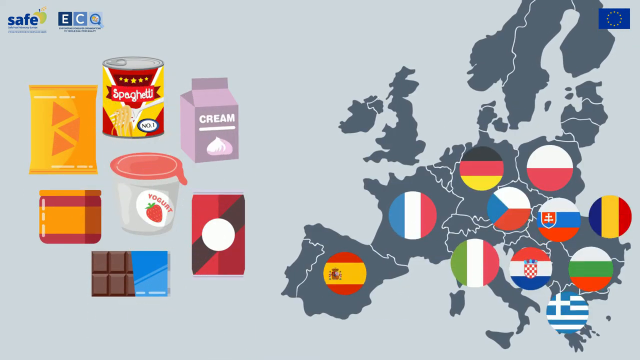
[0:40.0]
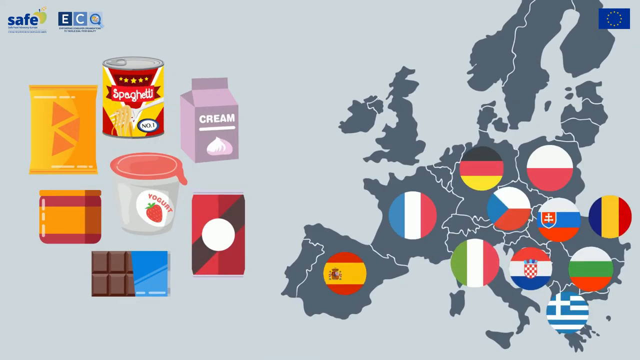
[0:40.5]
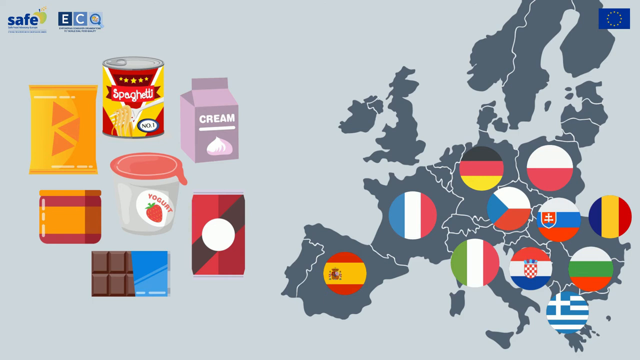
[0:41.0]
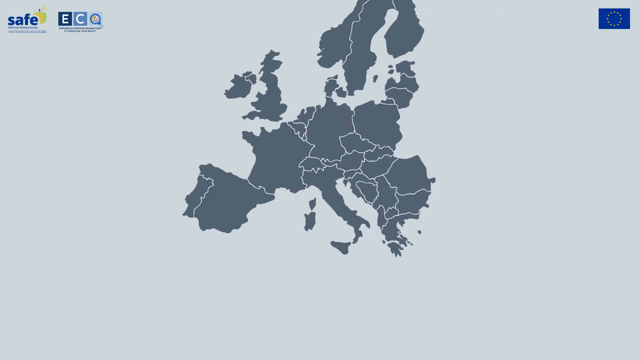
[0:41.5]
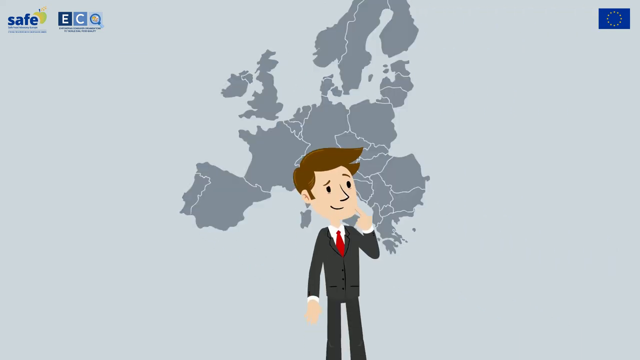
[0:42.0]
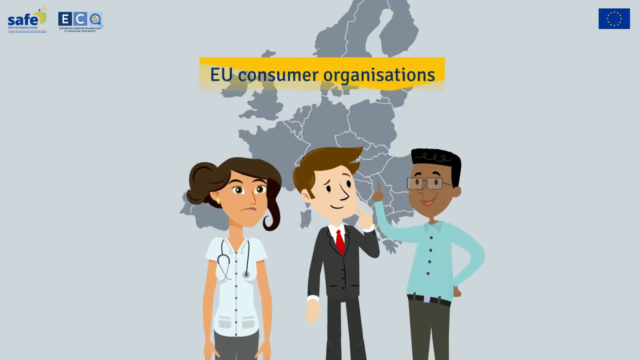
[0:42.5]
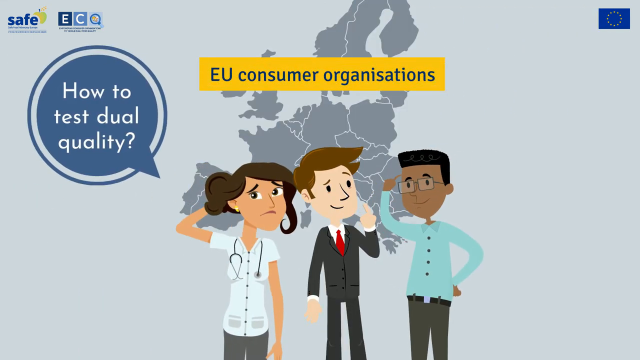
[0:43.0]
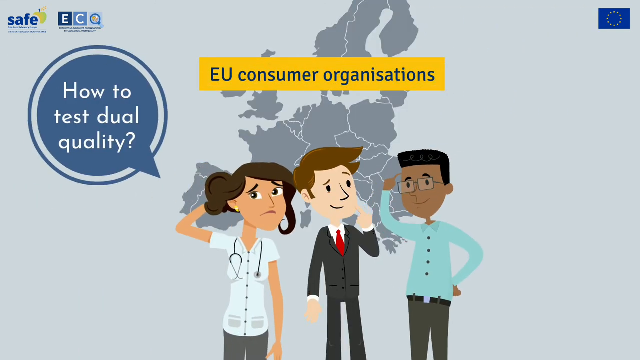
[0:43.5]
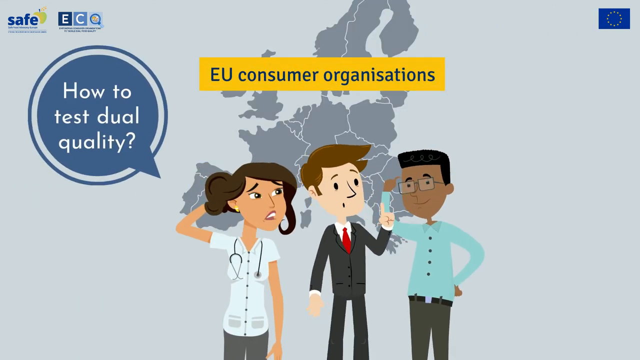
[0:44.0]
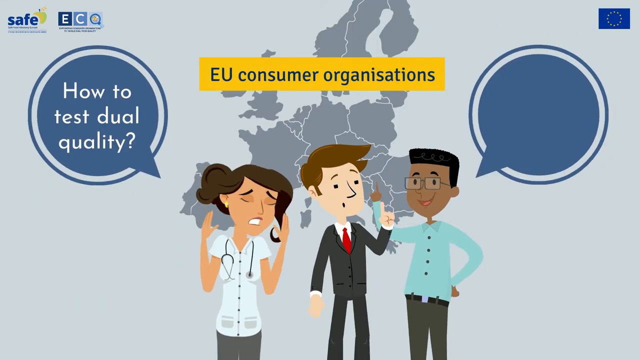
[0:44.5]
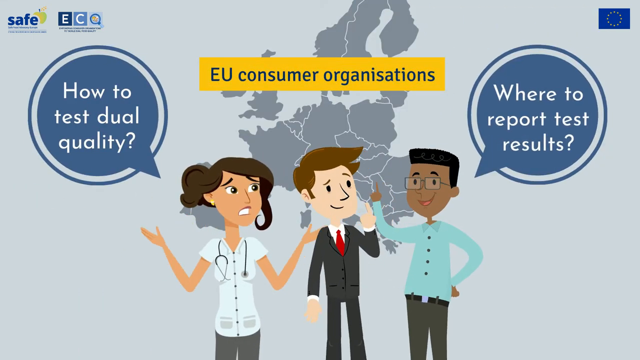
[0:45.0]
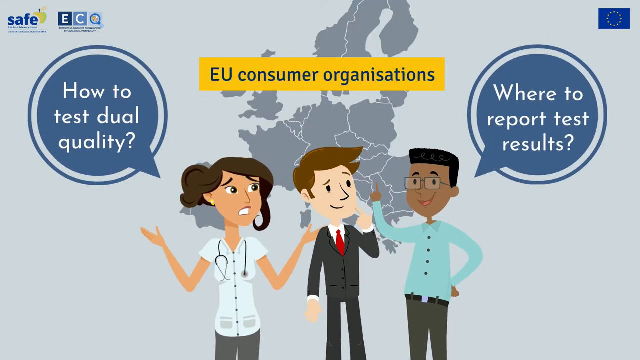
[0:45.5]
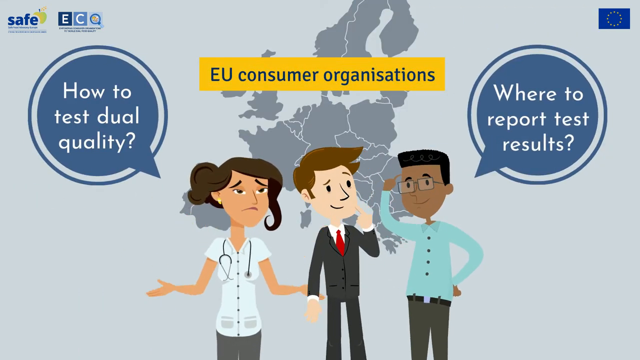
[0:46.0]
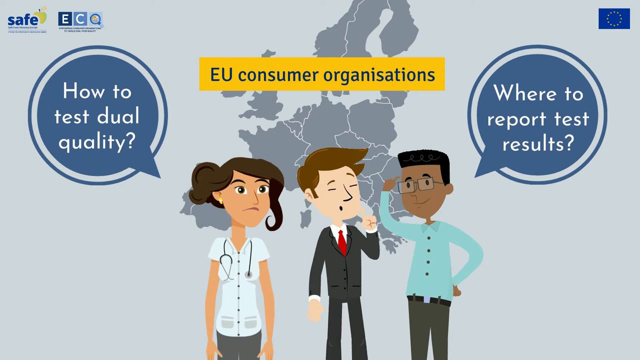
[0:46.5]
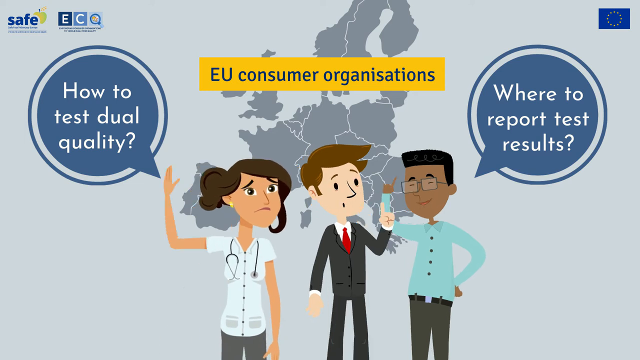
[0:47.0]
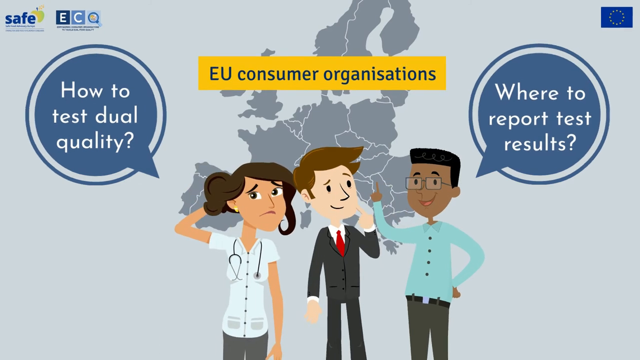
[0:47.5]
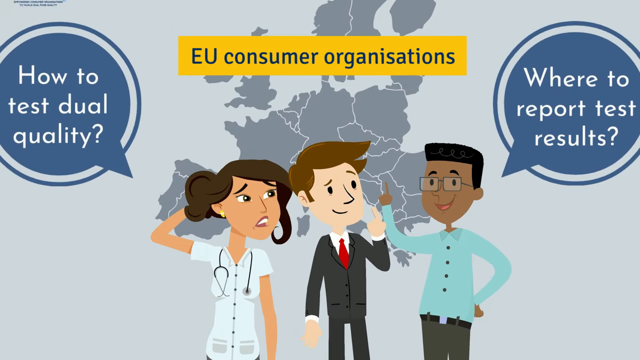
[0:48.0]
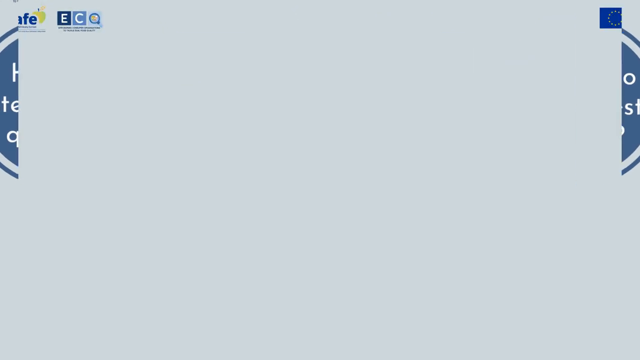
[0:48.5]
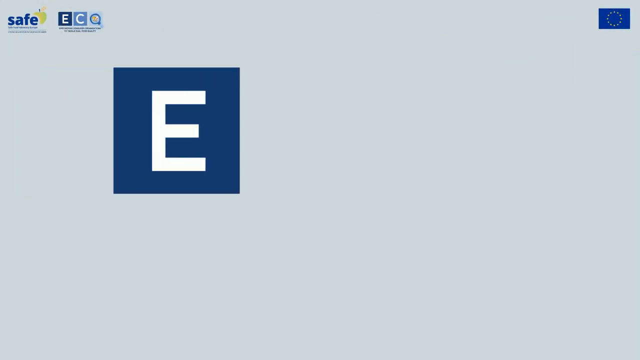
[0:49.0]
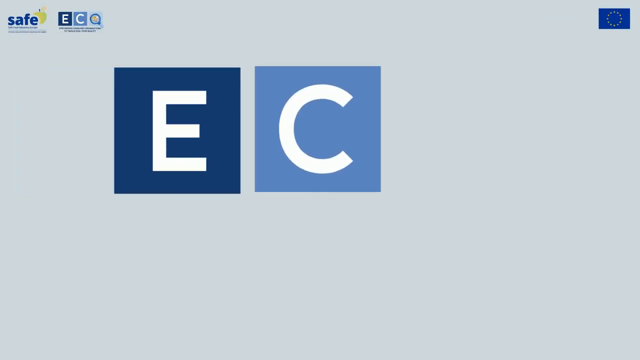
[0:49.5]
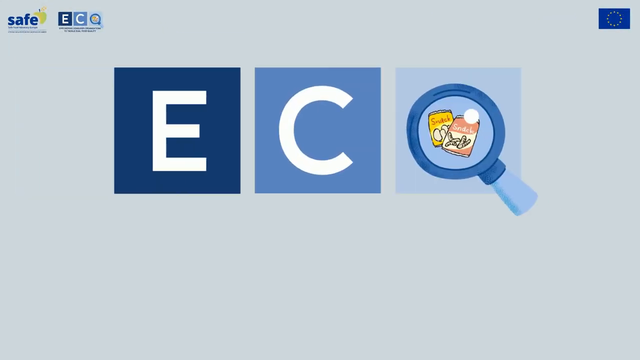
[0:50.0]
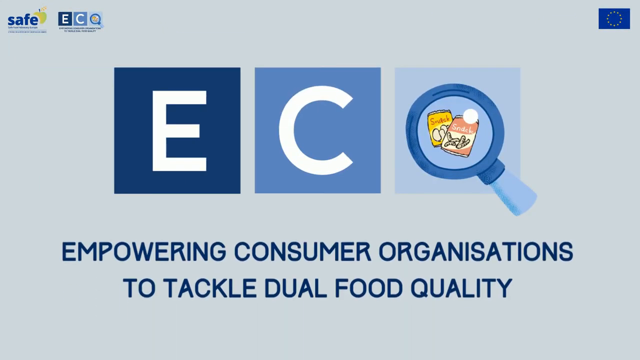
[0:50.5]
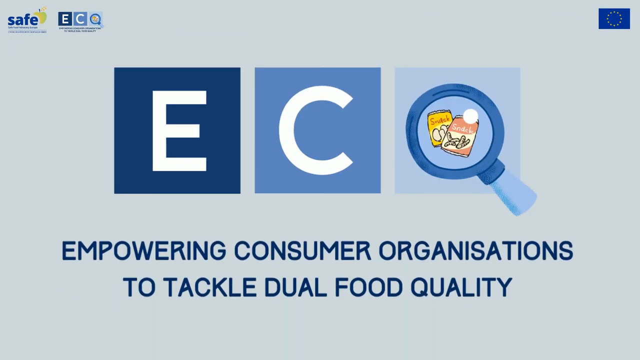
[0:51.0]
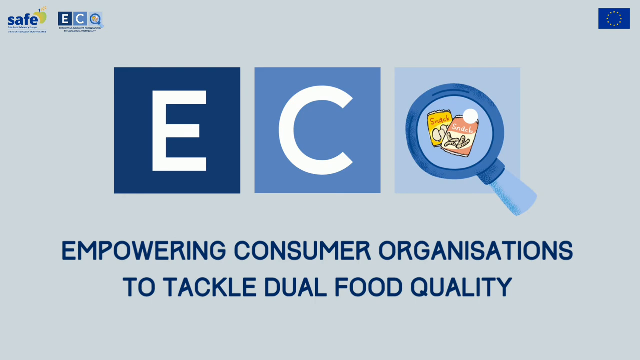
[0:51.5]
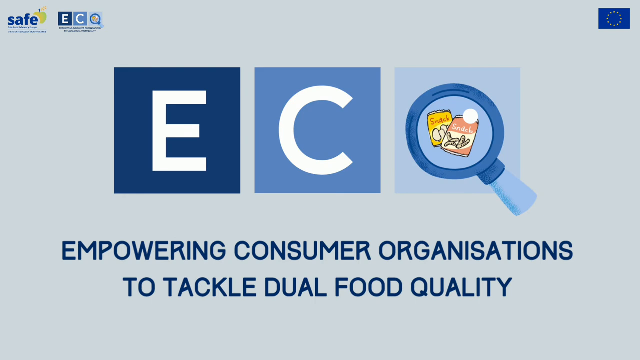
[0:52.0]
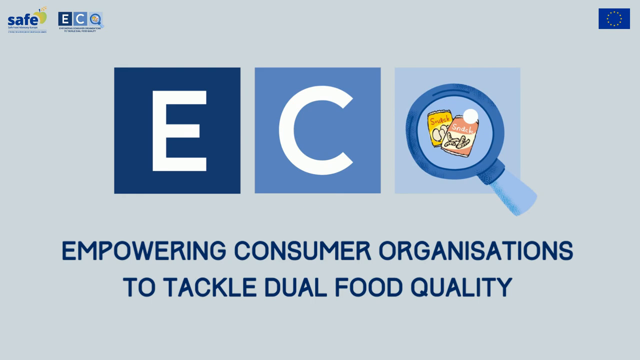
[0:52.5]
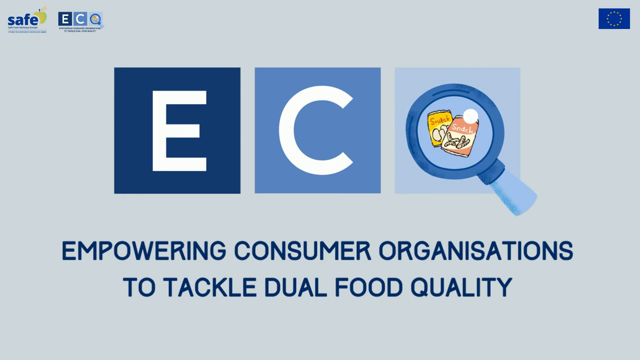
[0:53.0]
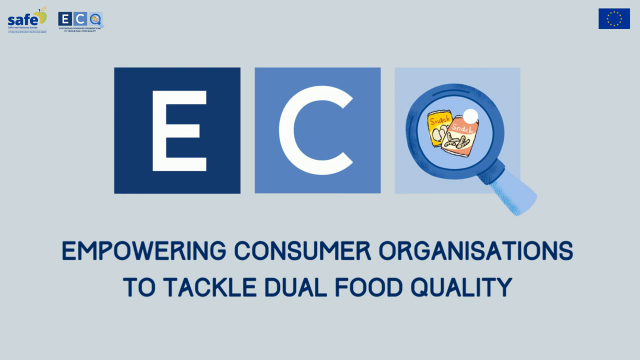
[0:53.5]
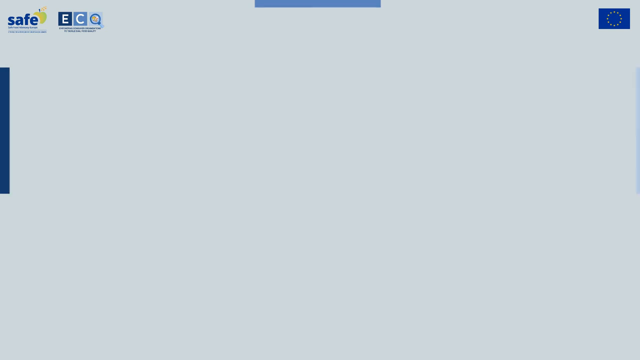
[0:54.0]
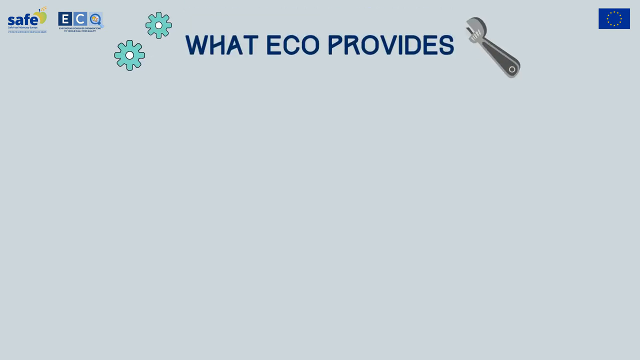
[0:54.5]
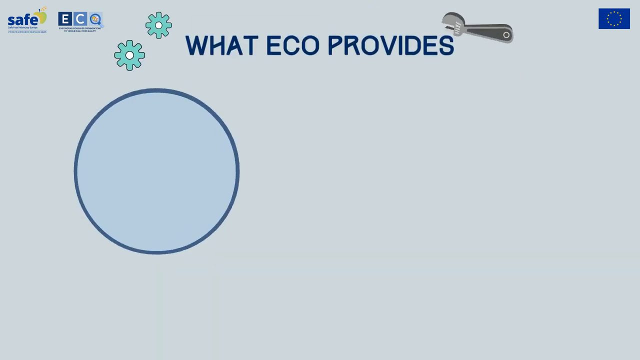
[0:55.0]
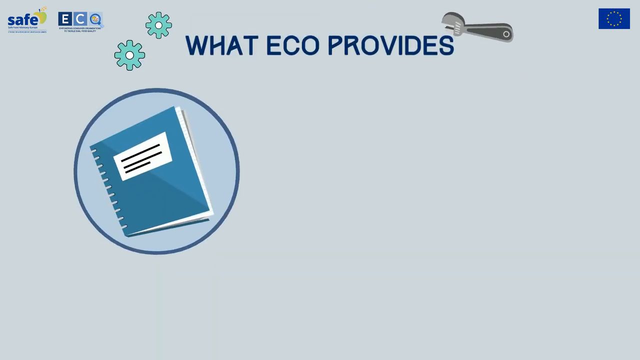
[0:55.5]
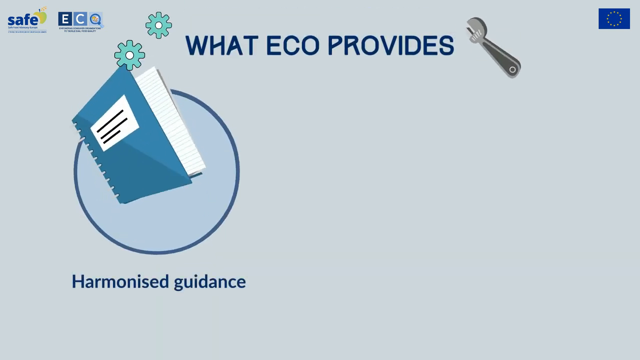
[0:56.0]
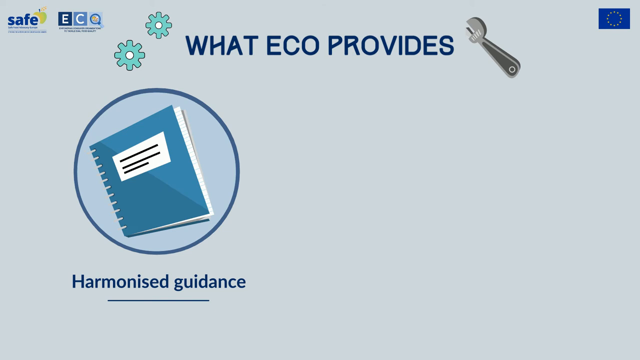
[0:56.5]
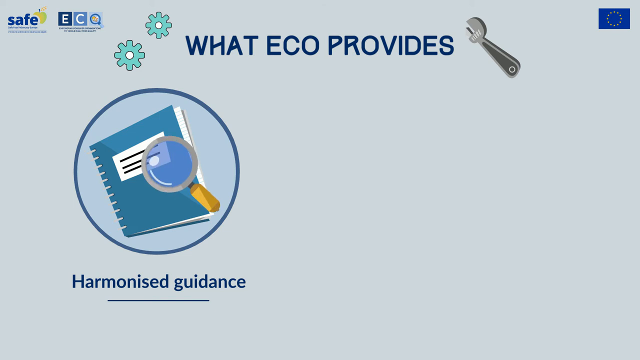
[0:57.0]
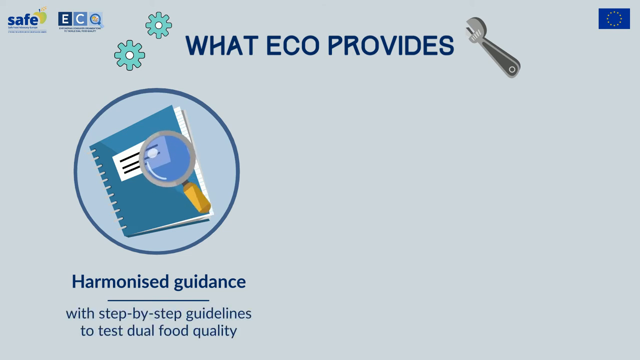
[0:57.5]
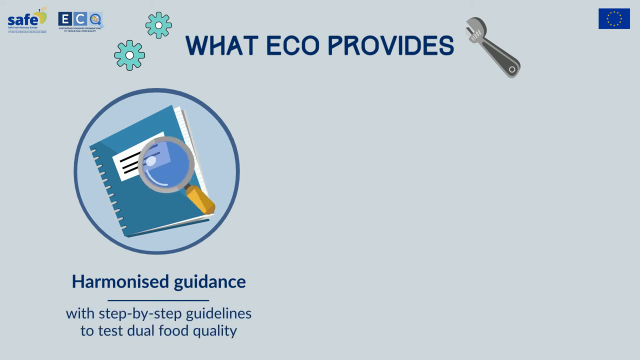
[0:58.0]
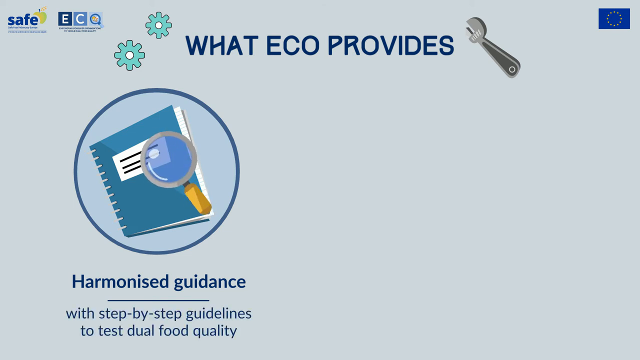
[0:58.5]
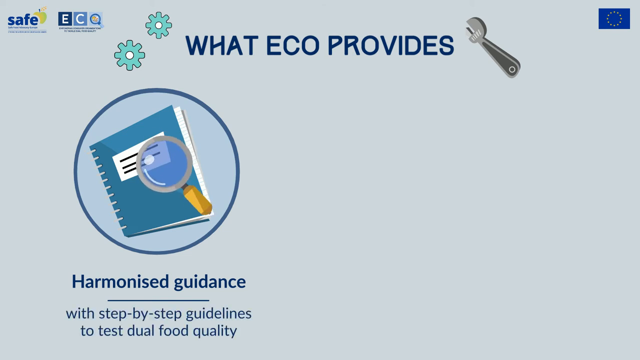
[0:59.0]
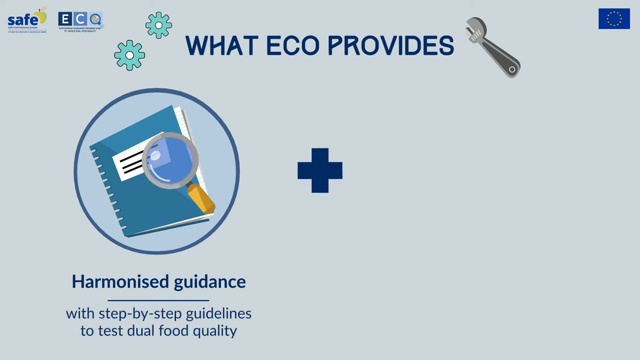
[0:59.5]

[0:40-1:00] Items are on the left: what looks like chips, spaghetti, creamer, soft drinks, chocolate under these, and some sort of salsa or possibly jam in the lower left corner. Yogurt is in the center. To the right is the map with all the countries, their flag colors shown in red circles on top of them. This disappears, a map appears in the background, and a white man in a tuxedo or suit with a red tie and brown hair appears in the center, pointing to his face. To his left a nurse pops up, wearing white scrubs, her black hair pulled back; she is possibly a foreign woman. To the right of the white man a black man pops up with a low cut fade and glasses; he points up, has his hands on his hips and smiles, wearing an aqua blue shirt and what appear to be darker jeans. Above them is the text "EU Consumer Organizations". A text bubble near the nurse reads "how to test dual quality", and one by the black man reads "where to report test results". They scratch their heads, and the man in the middle pulls his finger away from his face. This goes away and "ECO" pops up, with the O in the shape of a magnifying glass containing snacks, and under it "empowering consumer organizations to tackle dual food quality". The screen switches to "what ECO provides", and under it "harmonized guidance" with some sort of book in the middle of a circle with a magnifying glass, then a plus, then a computer screen.